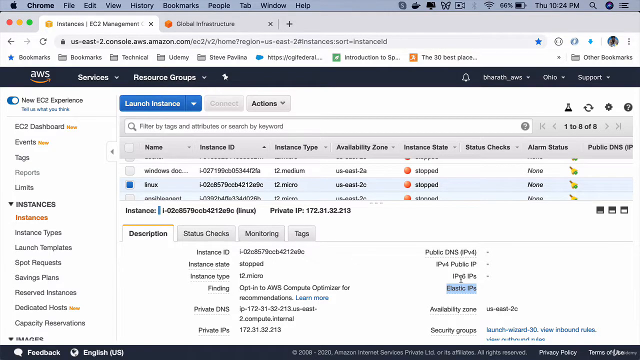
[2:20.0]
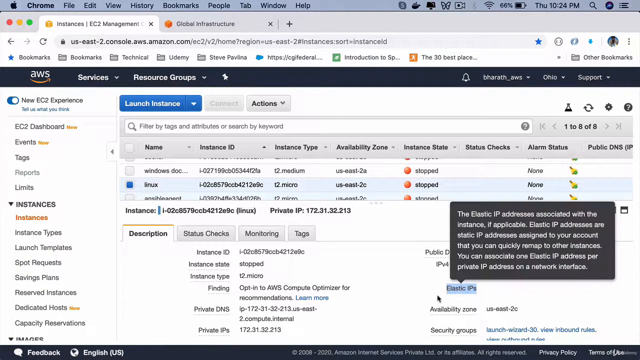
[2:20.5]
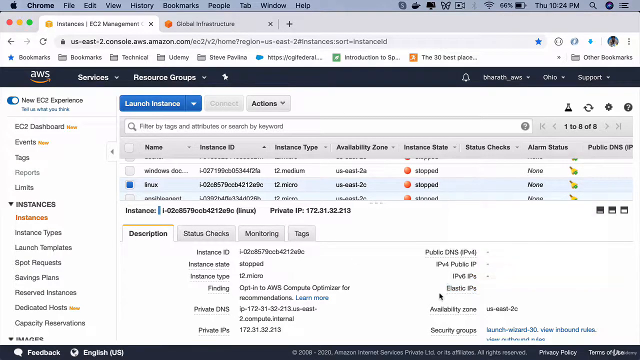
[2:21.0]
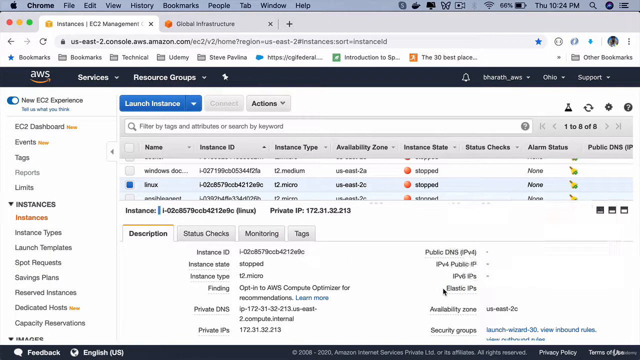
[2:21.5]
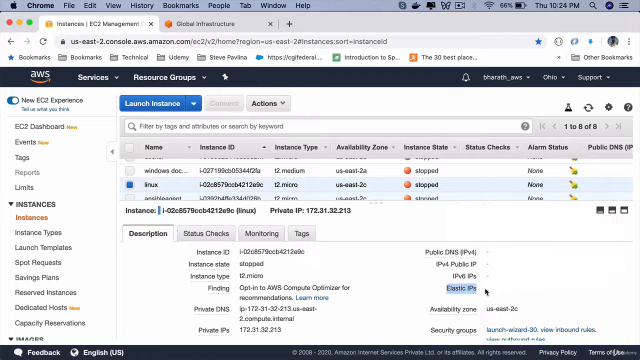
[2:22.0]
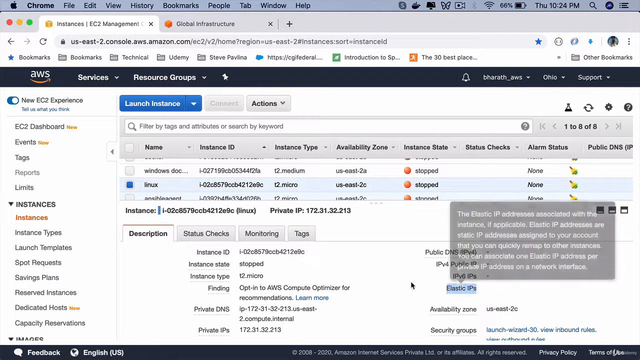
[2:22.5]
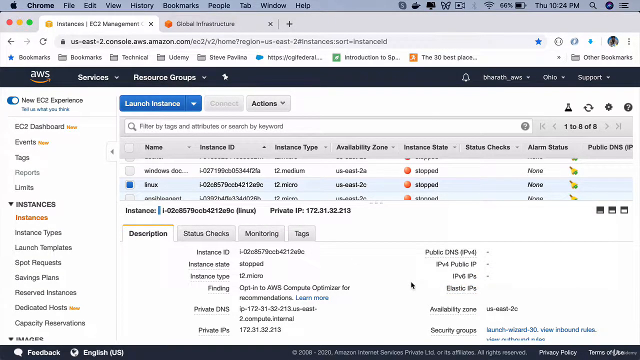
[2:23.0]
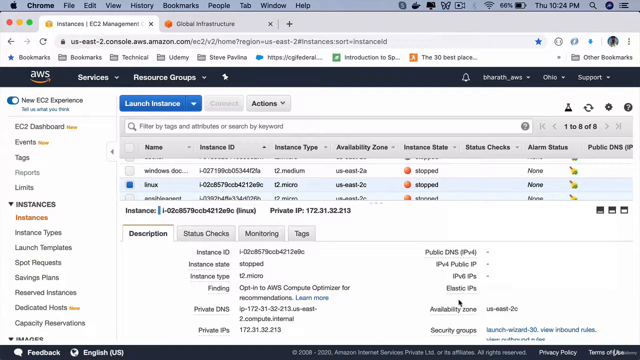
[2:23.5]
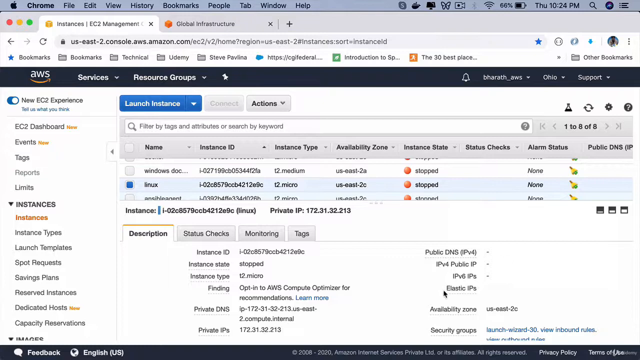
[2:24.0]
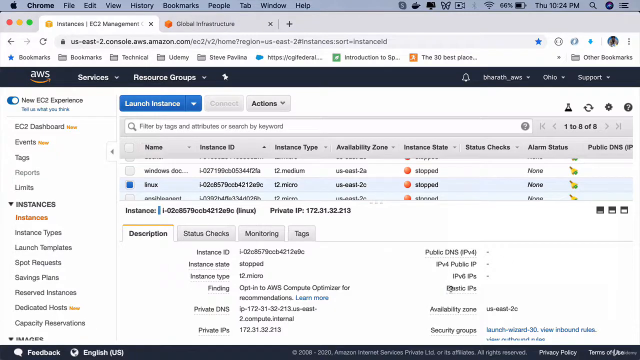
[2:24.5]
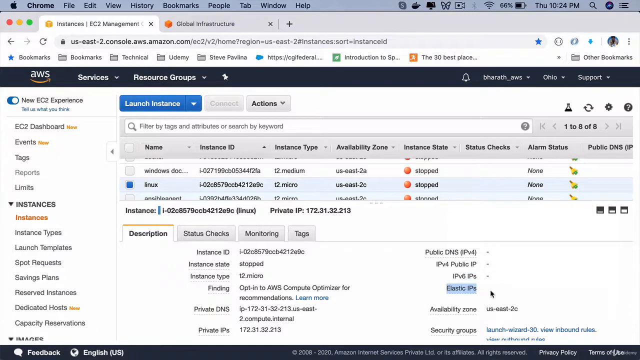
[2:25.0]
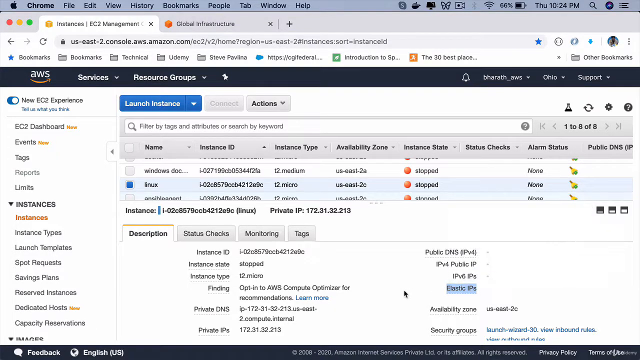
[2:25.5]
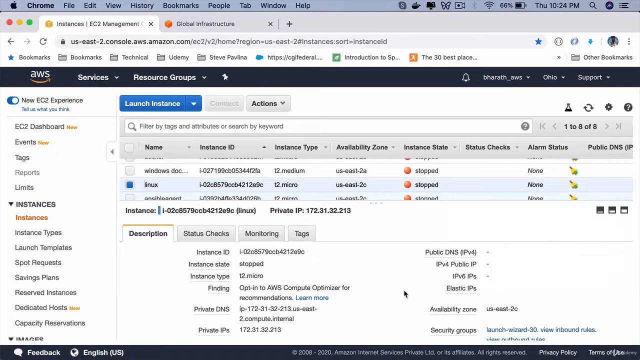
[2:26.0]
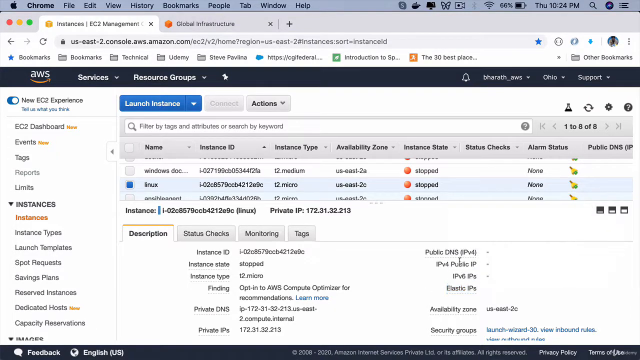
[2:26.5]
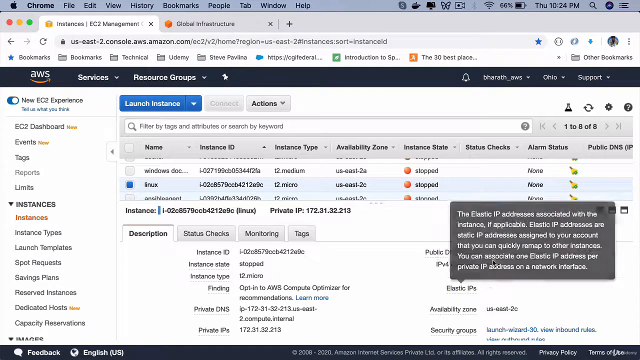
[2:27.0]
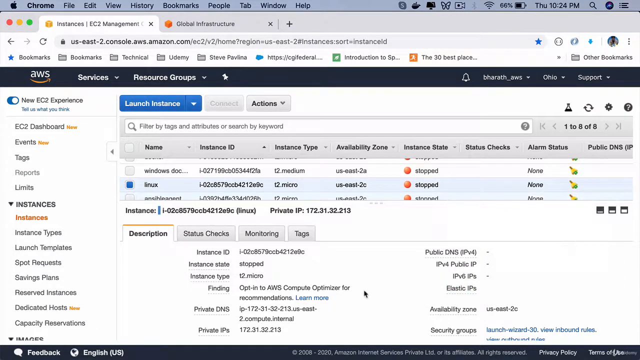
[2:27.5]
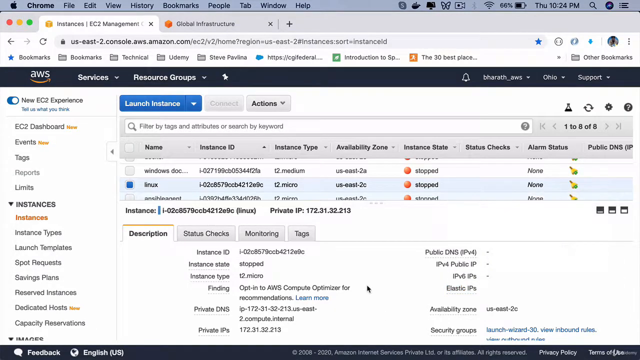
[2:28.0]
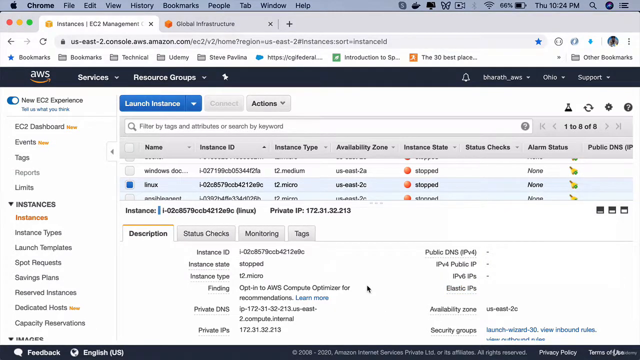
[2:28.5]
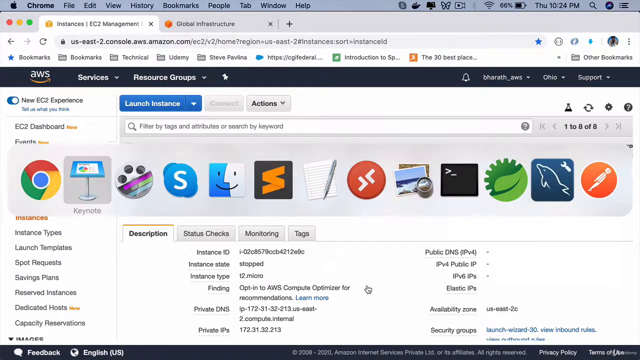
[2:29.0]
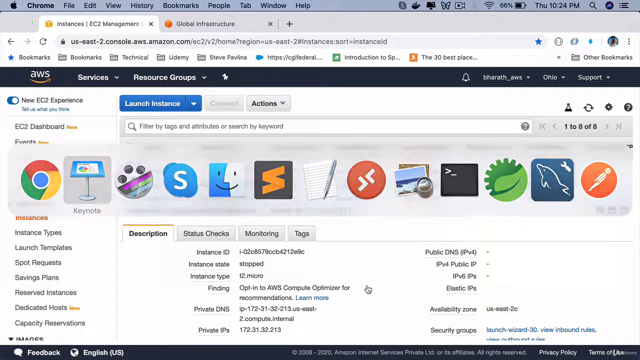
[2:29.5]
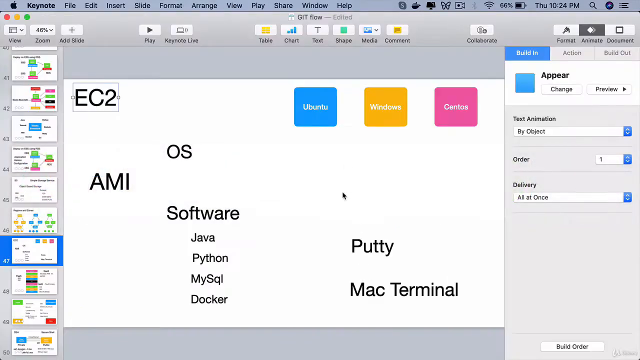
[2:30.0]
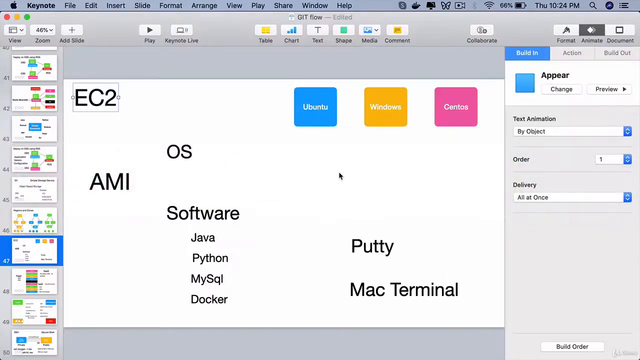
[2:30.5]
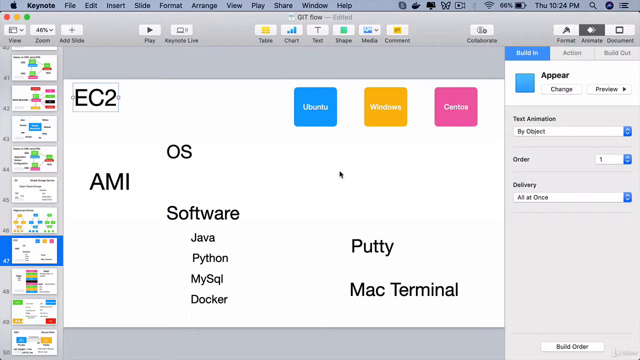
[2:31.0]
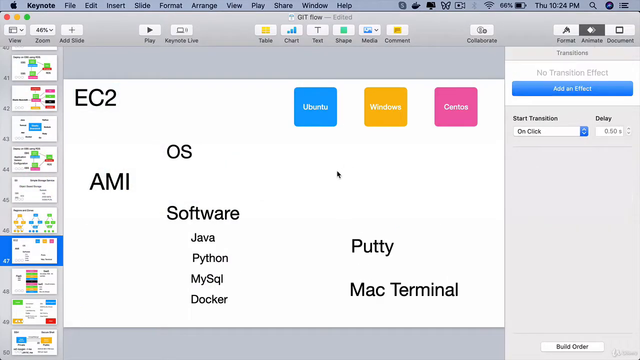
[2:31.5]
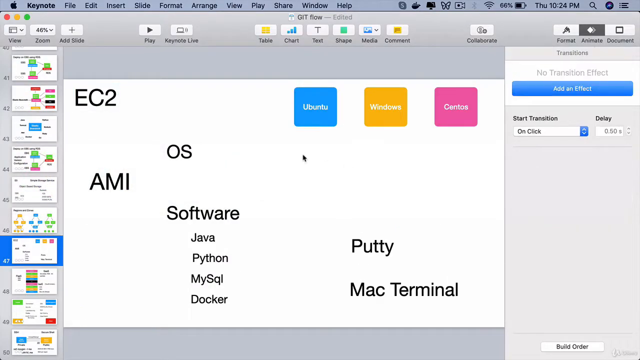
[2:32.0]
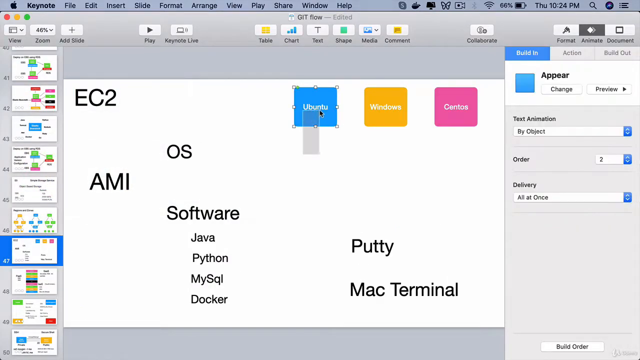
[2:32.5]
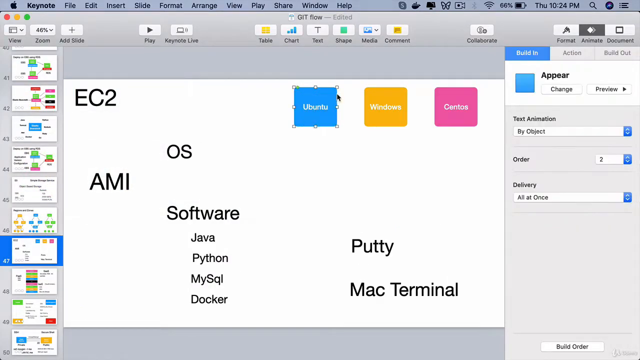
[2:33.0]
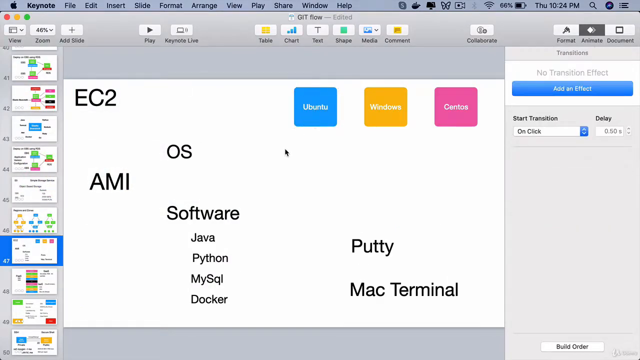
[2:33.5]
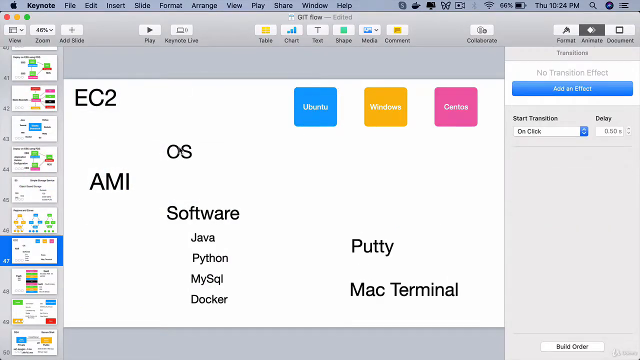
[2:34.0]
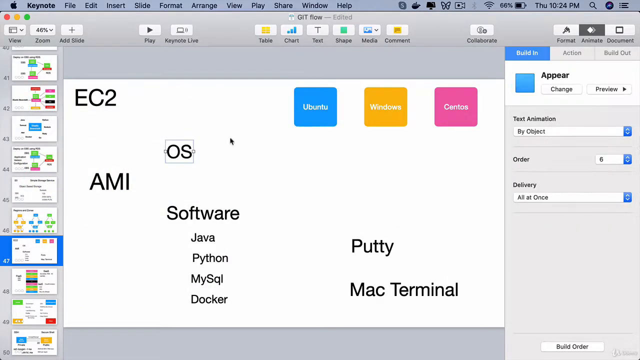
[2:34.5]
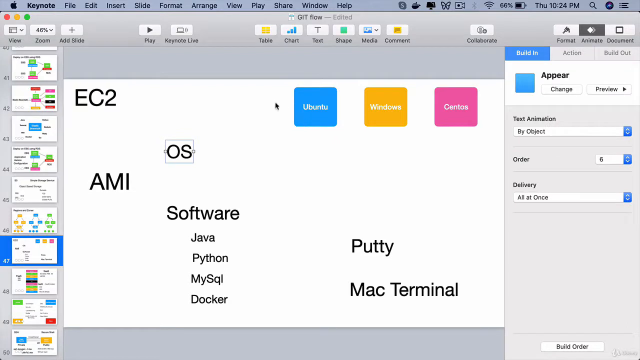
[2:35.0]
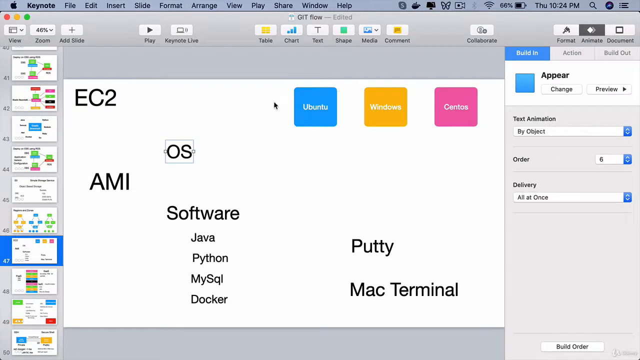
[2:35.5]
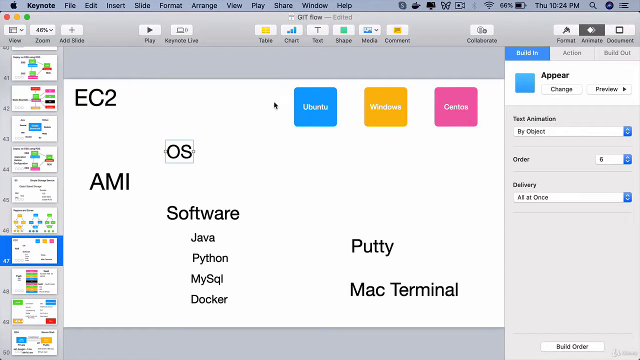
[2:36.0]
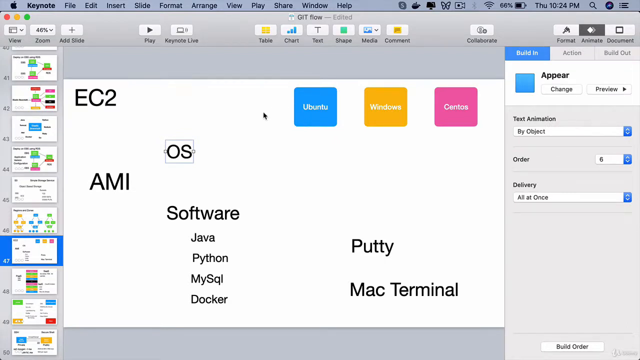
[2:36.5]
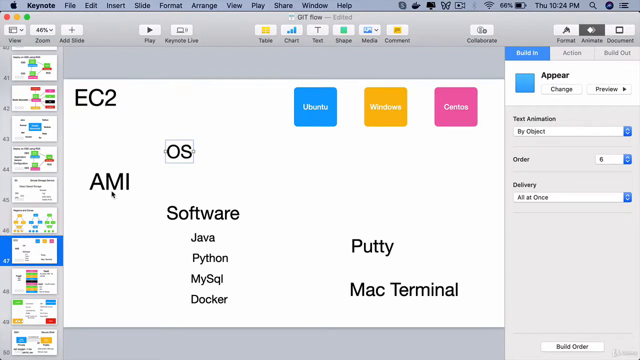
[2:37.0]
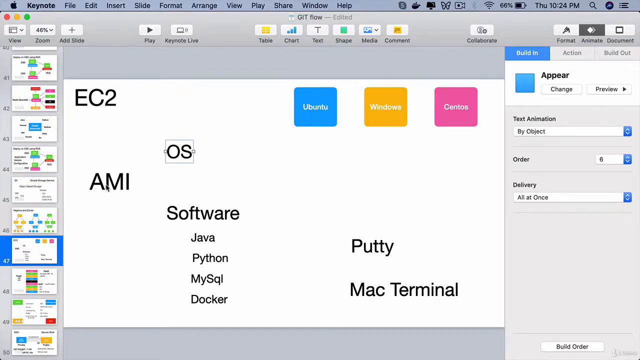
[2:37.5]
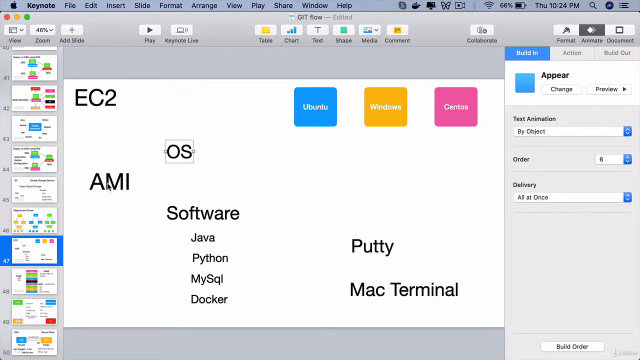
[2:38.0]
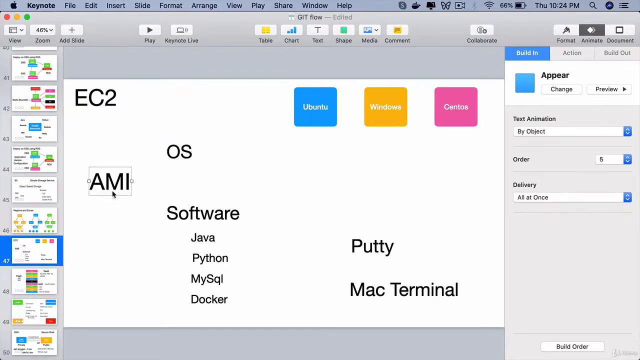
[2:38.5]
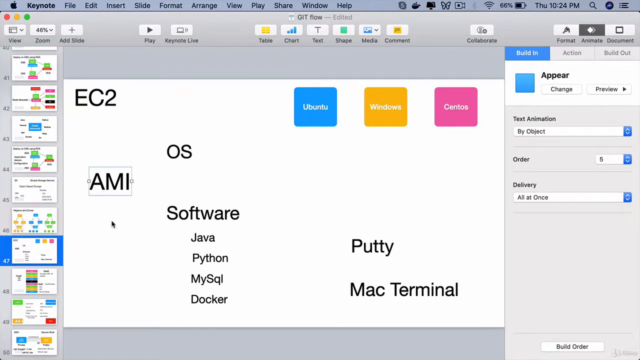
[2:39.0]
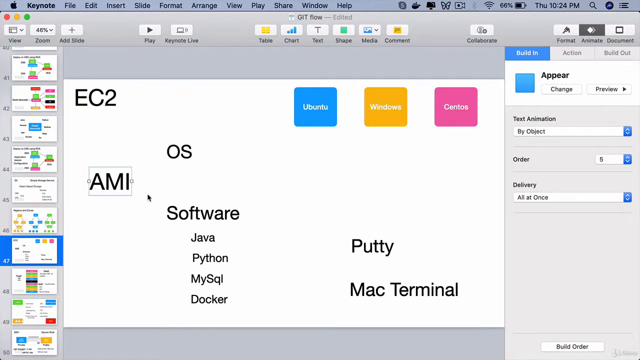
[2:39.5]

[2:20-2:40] The slightly wide video shows the desktop of someone using a Mac operating system. The typical menu bar at the top includes File, Edit, View, History, Bookmarks, People, Tab, Window and Help, and the time in the upper right reads 10:24 PM. A web browser has two tabs open, and the first, "Instances, EC2 Management", is selected. The web page shows the AWS logo with the smile underneath, followed left to right by two drop-downs, "Services" and "Resource Groups". The left navigation lists "New EC2 Experience", "EC2 Dashboard", "Events", "Tags", "Reports" and "Limits", then an "Instances" drop-down with "Instances", "Instance Types", "Launch Templates", "Spot Requests", "Savings Plans" and "Reserved Instances" under it. In the central control area, the "Description" tab is selected.